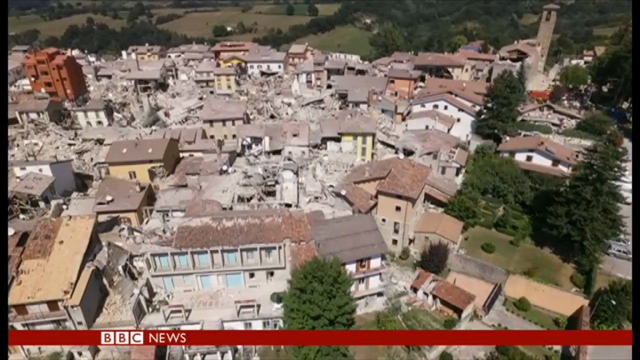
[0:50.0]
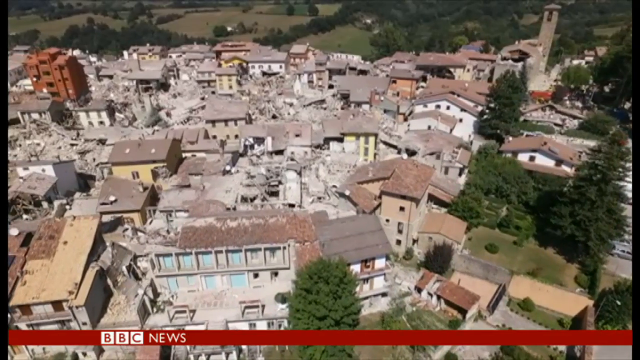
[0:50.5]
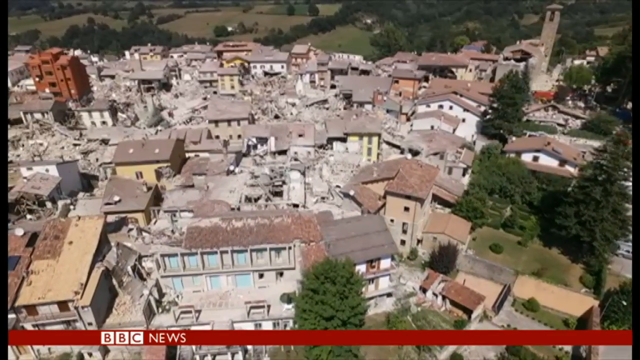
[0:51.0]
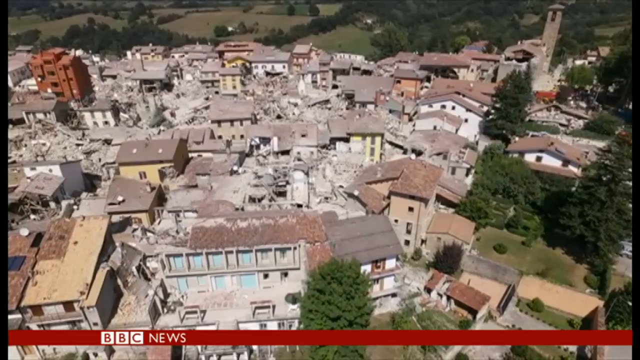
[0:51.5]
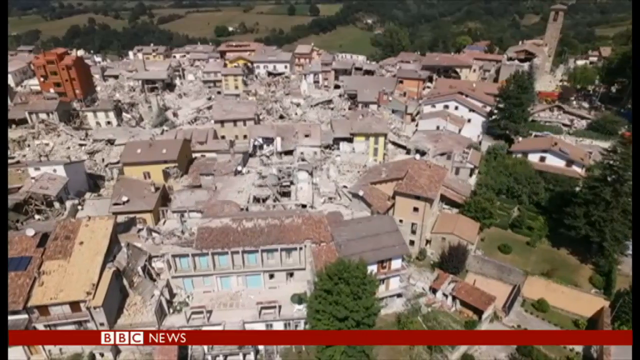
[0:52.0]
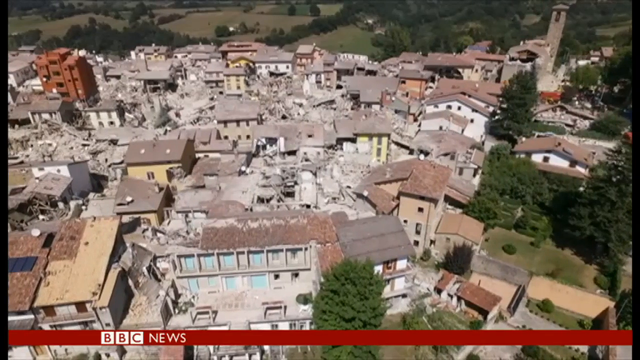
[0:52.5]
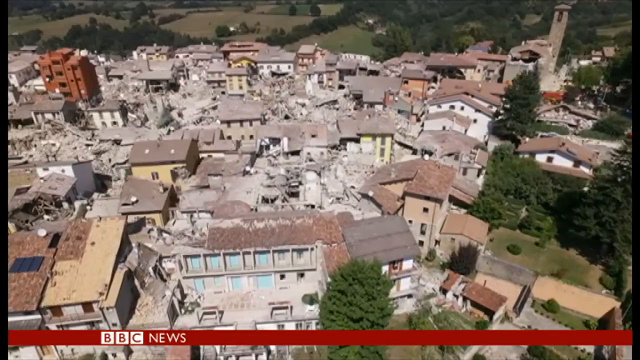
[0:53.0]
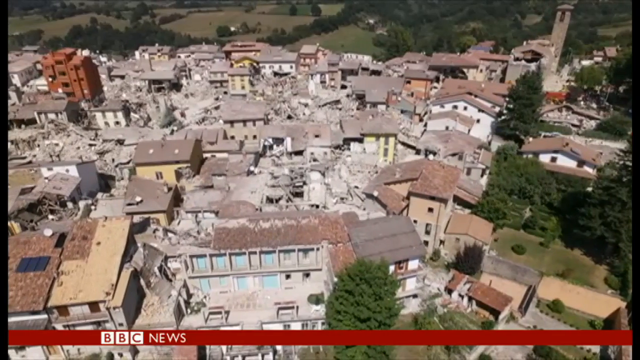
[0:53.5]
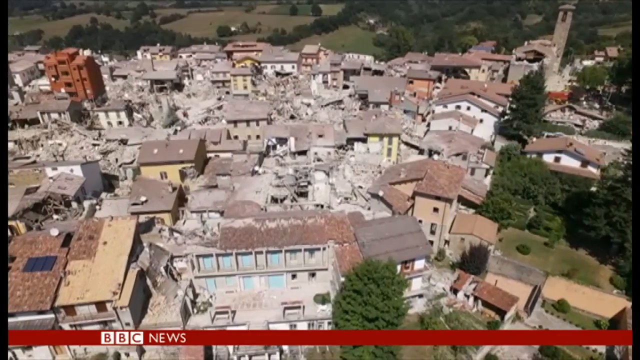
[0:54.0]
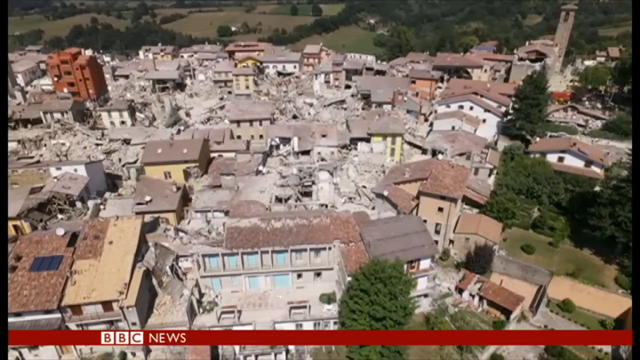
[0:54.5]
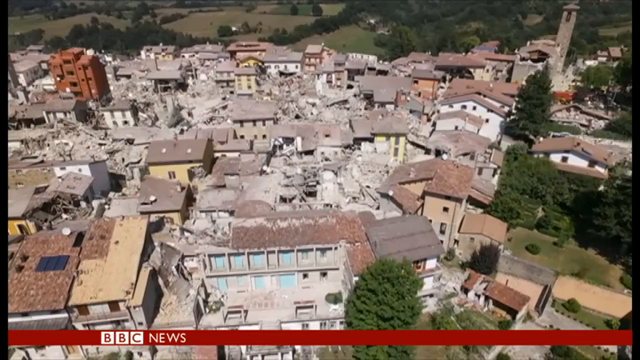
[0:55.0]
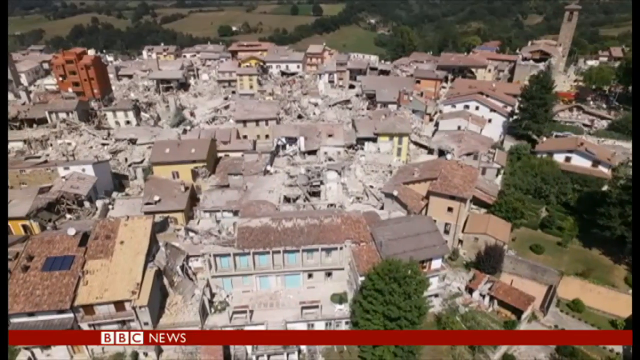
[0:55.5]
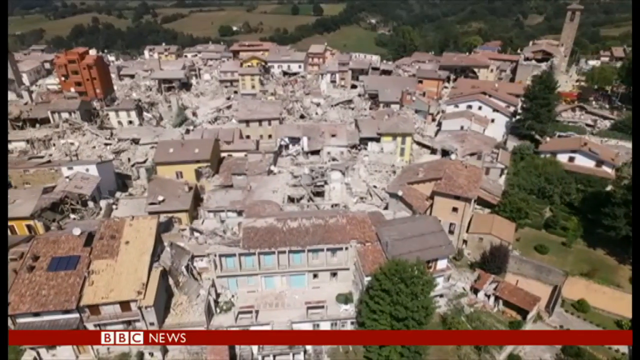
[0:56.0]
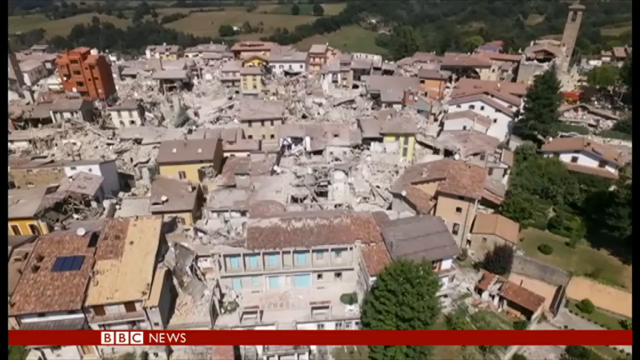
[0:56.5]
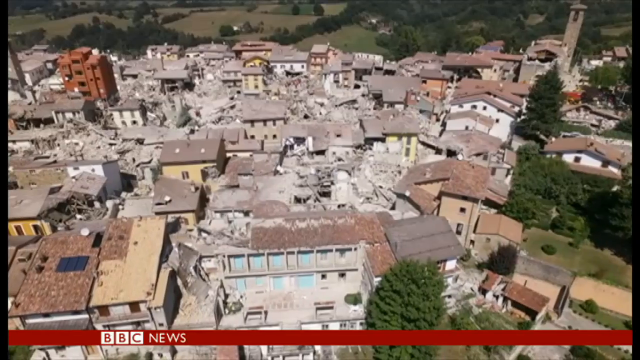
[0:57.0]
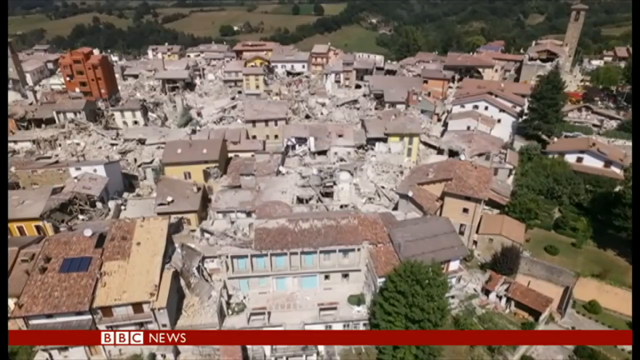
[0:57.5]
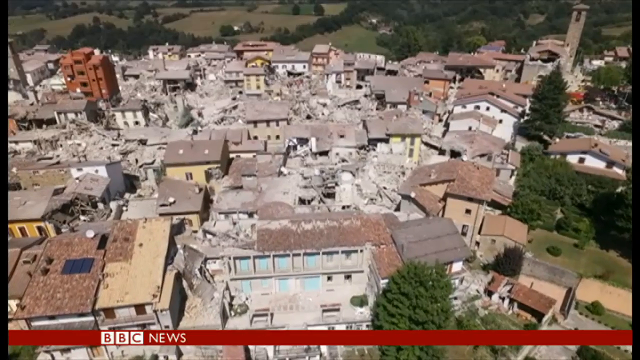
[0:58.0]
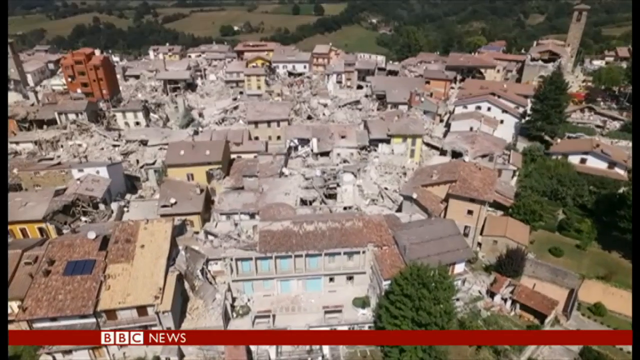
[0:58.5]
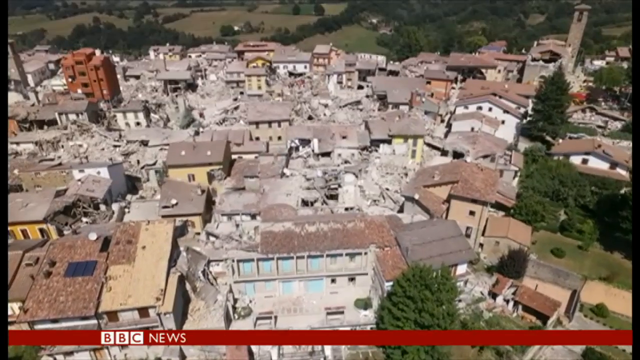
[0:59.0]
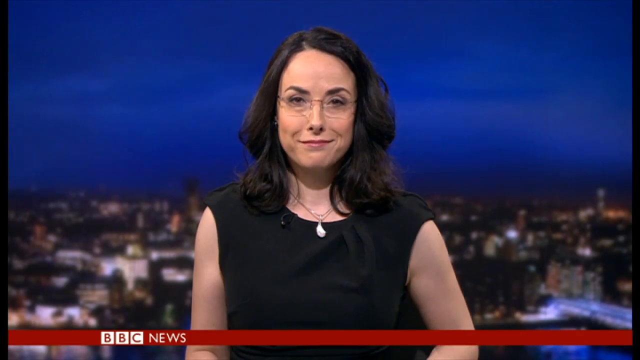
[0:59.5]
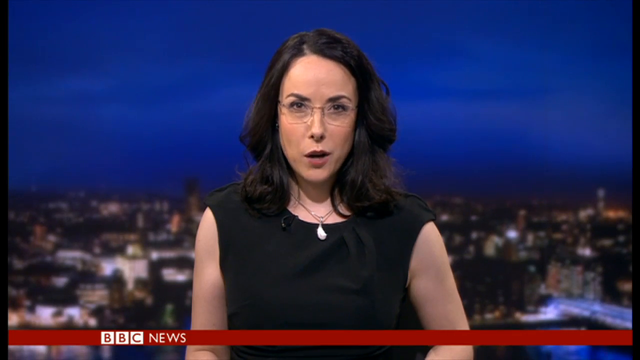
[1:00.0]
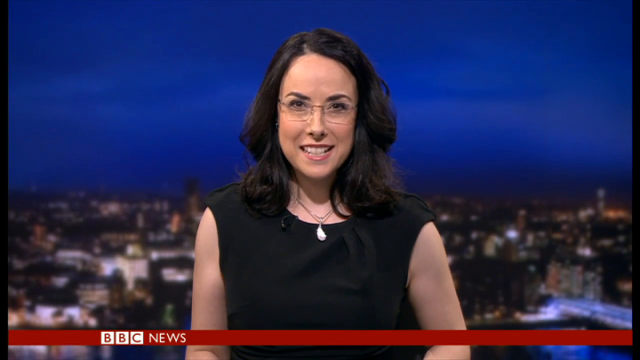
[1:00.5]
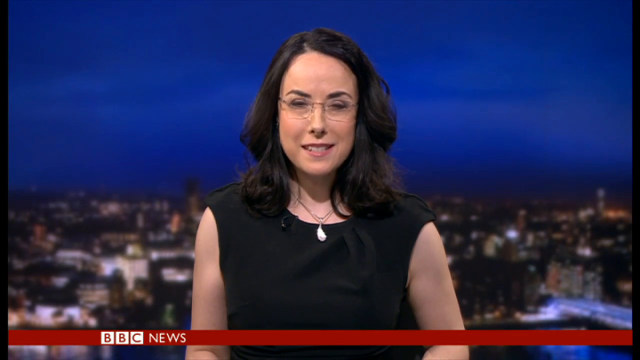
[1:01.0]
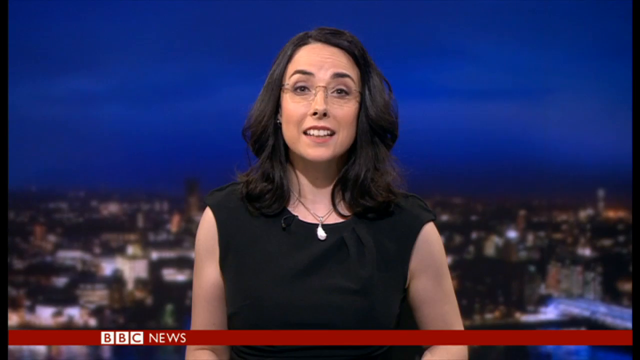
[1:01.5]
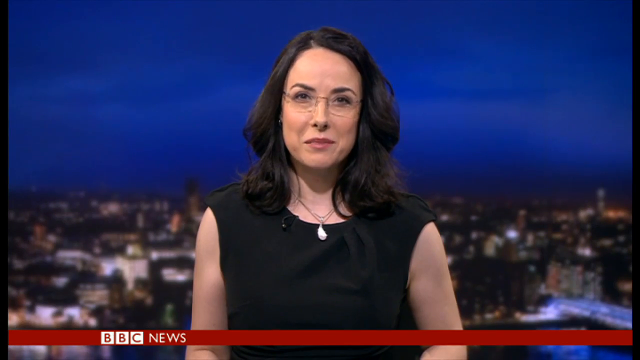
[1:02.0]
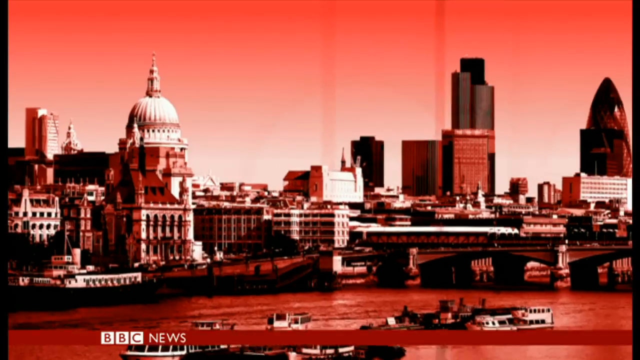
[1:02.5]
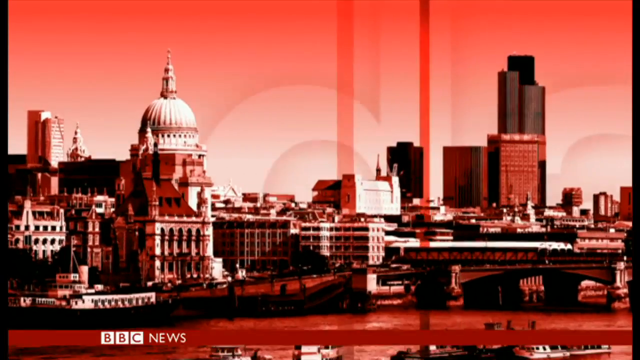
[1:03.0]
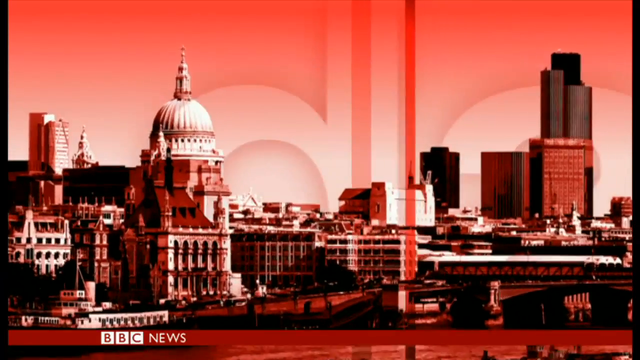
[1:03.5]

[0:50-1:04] The aerial shot looks almost like it is from a helicopter camera, slowly panning from right to left, and it looks like older video. At the top right a vertical thing rises, almost like a watchtower in the distance, with a larger, taller tree of almost the same height to its right and a bunch of trees on the hillside behind it. Farmland is at the top left, toward the middle. Throughout this shot, "BBC News" appears at the bottom on a long red bar that goes from the left to the right edge of the screen. The video then cuts to the woman anchor, who suddenly smiles and tilts her head as she smiles, says a few words, and nods her head a little. Next comes a picture of a capital scene, with a building in front of it and, to the right, a bridge with a train going across it. The whole image is in a red color scheme, with a vertical red bar with a shadow on it to the left. Behind it, in very large letters, apparently is "D.A", with the D over the capital and the A over a large skyscraper.